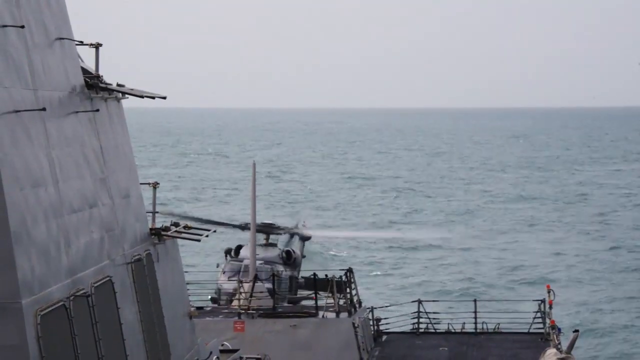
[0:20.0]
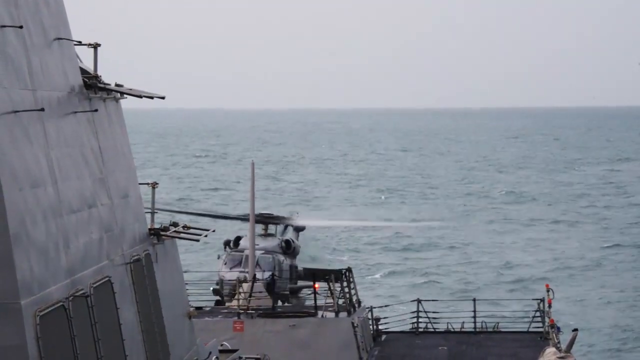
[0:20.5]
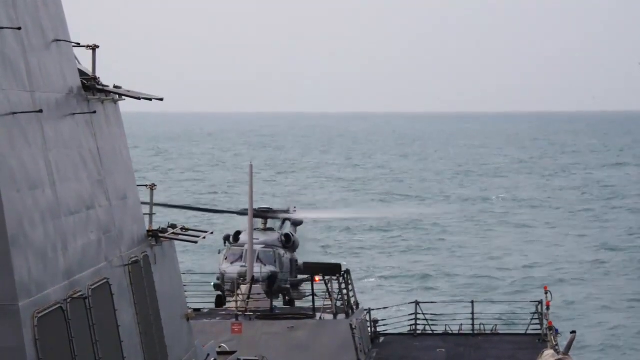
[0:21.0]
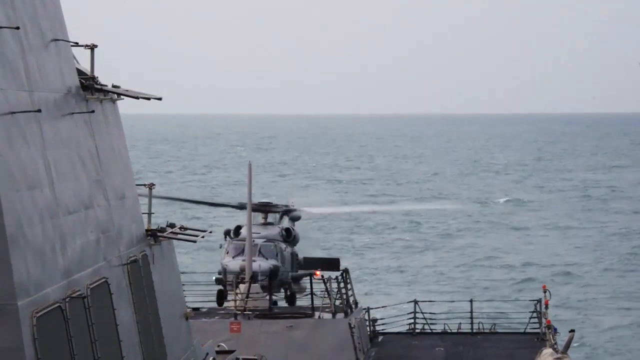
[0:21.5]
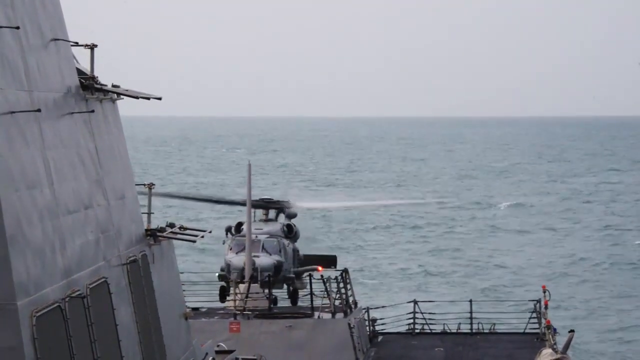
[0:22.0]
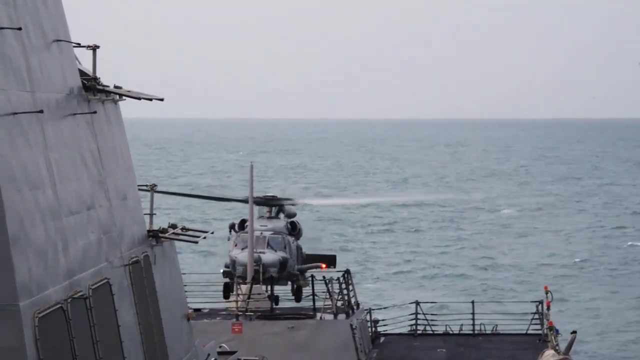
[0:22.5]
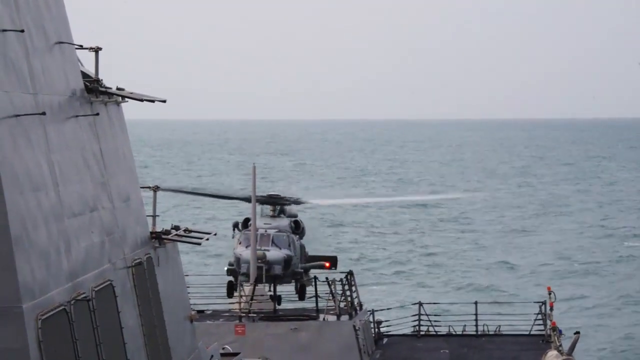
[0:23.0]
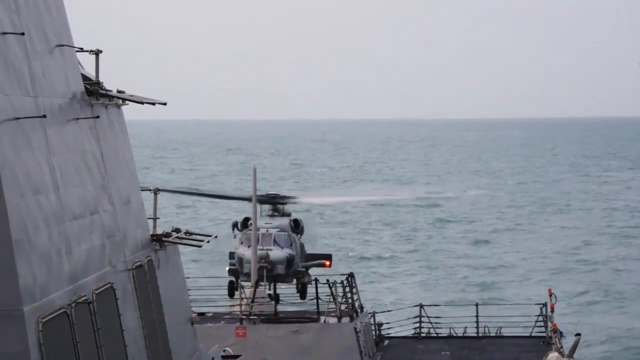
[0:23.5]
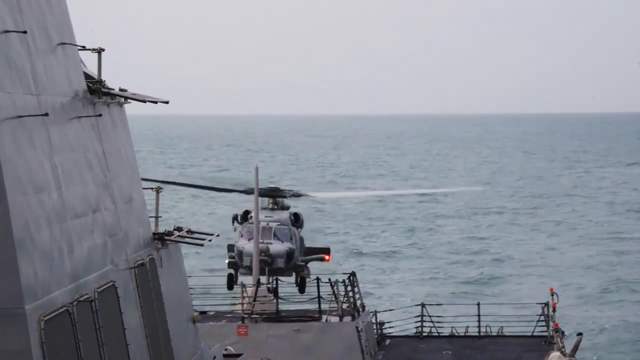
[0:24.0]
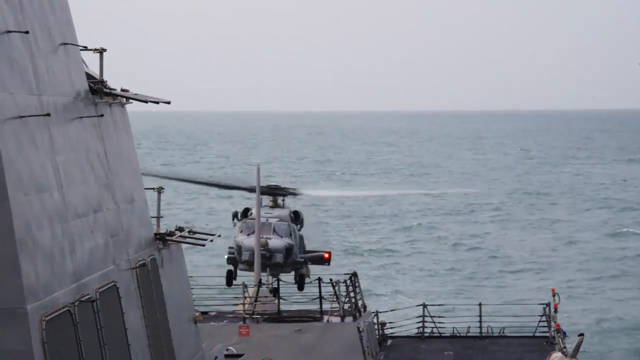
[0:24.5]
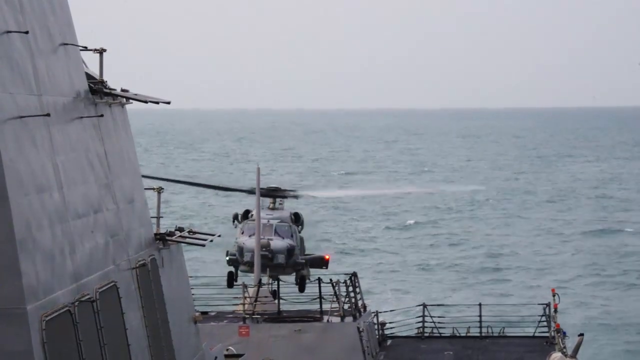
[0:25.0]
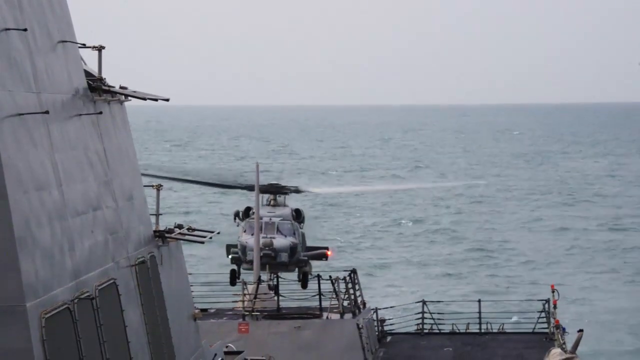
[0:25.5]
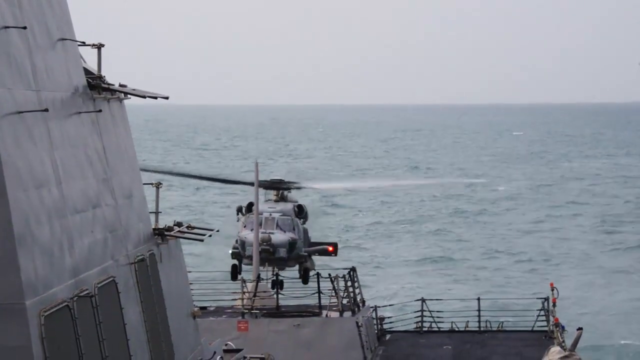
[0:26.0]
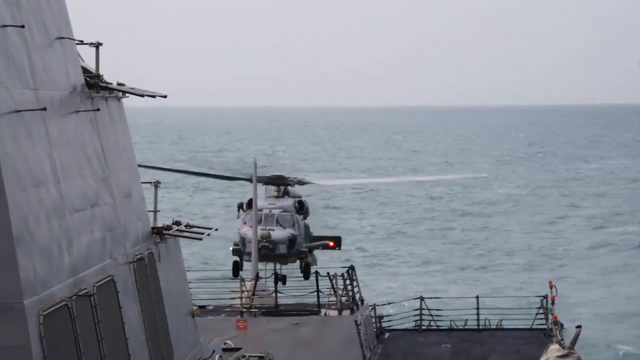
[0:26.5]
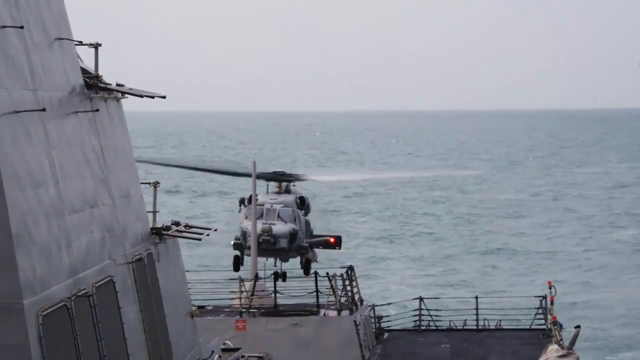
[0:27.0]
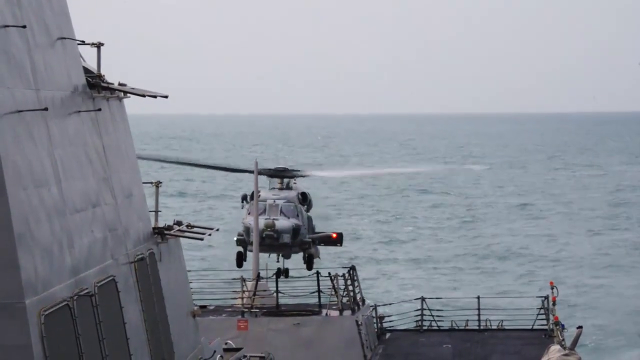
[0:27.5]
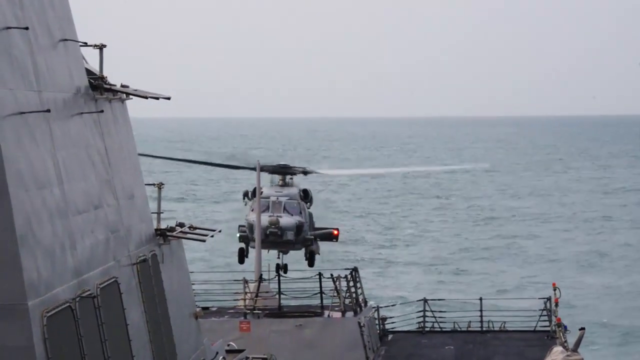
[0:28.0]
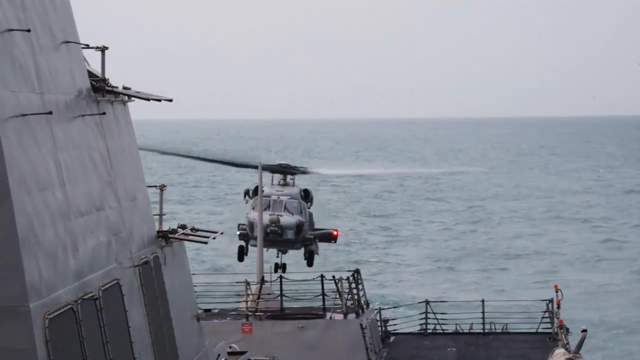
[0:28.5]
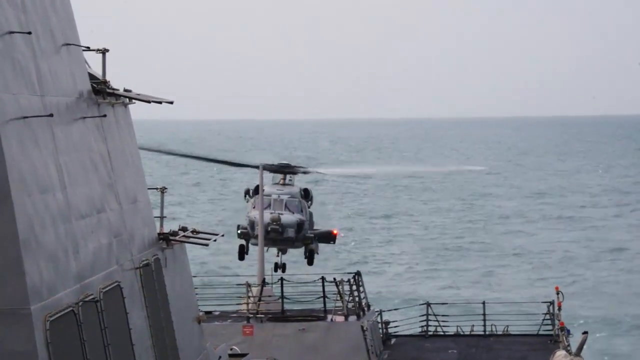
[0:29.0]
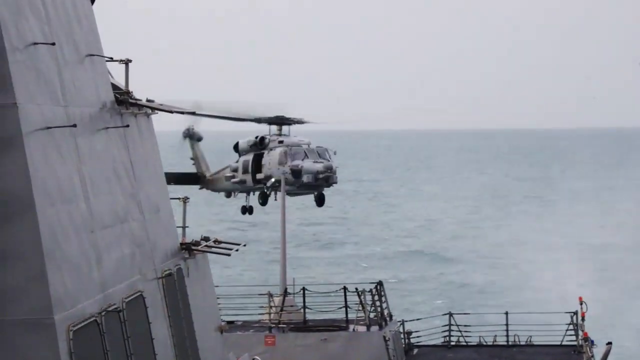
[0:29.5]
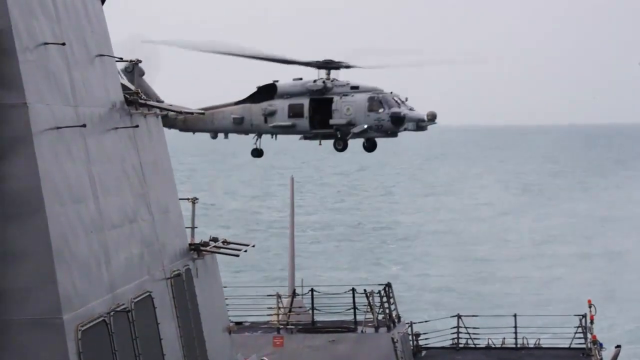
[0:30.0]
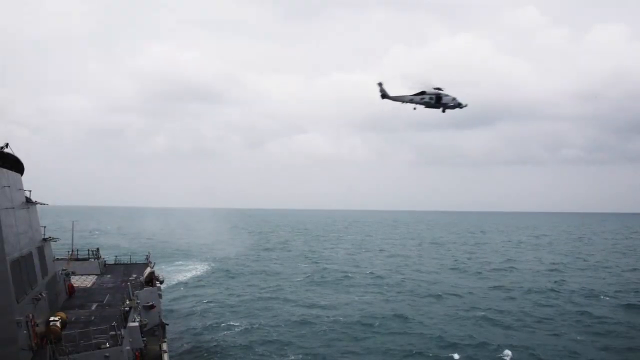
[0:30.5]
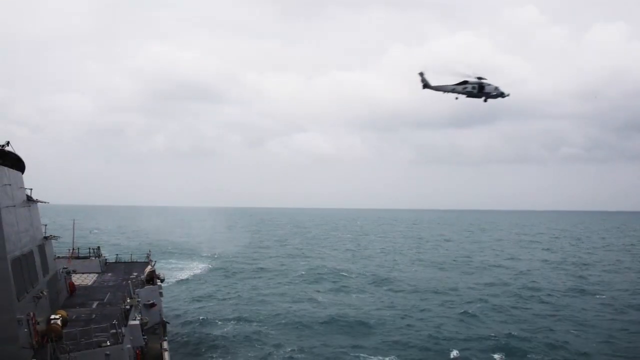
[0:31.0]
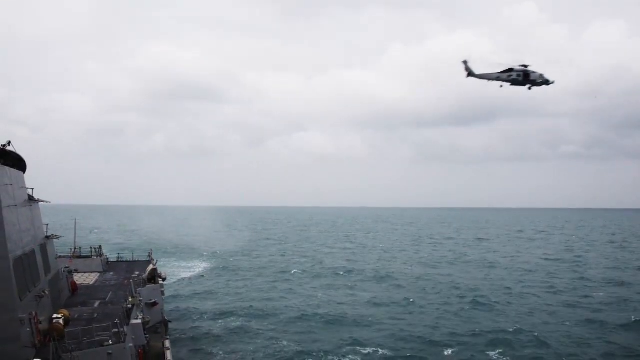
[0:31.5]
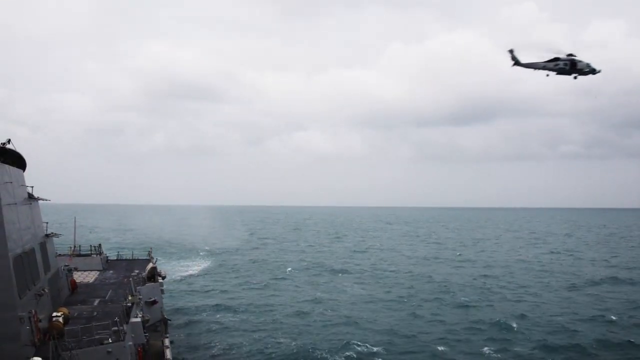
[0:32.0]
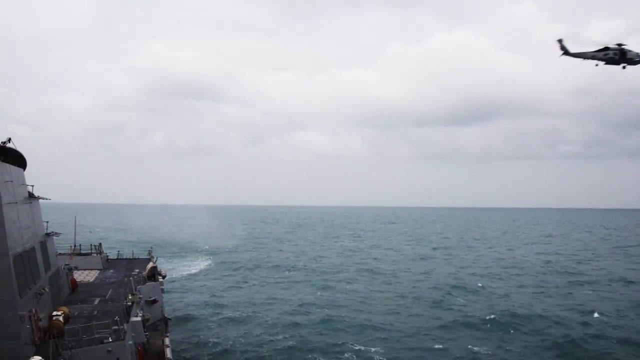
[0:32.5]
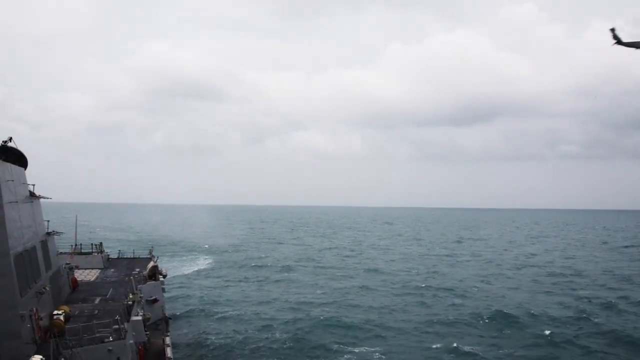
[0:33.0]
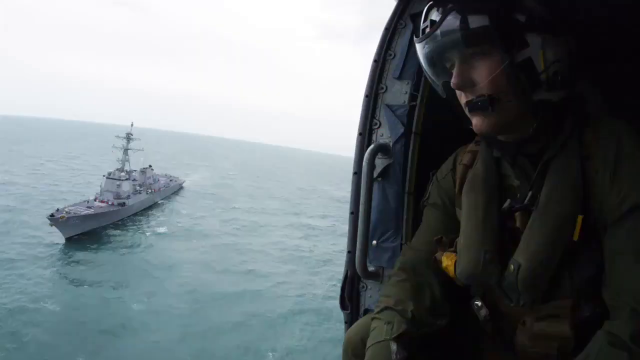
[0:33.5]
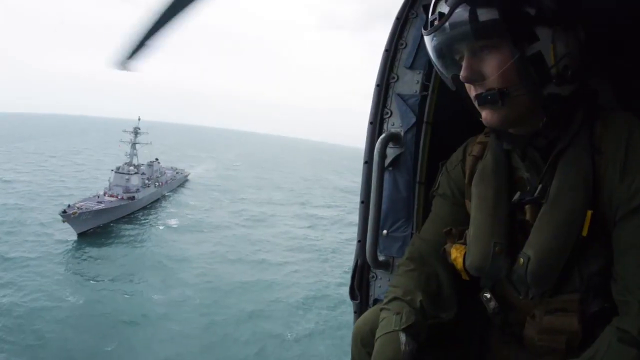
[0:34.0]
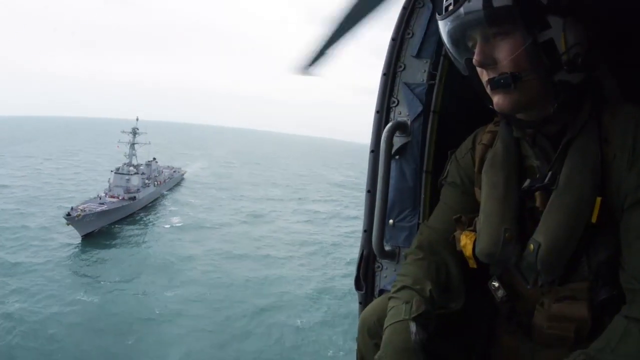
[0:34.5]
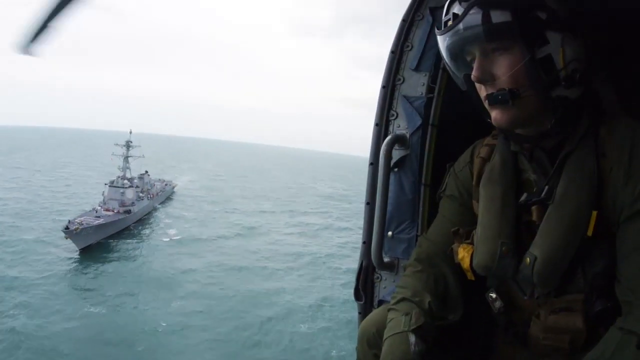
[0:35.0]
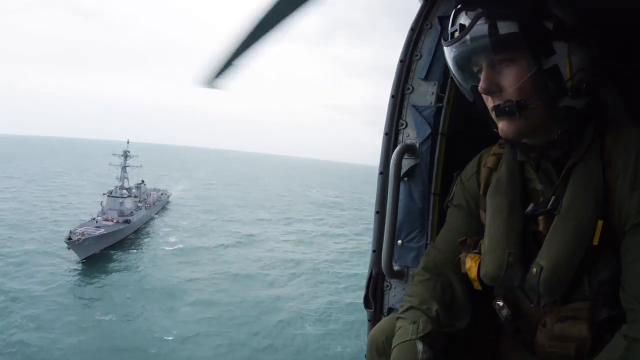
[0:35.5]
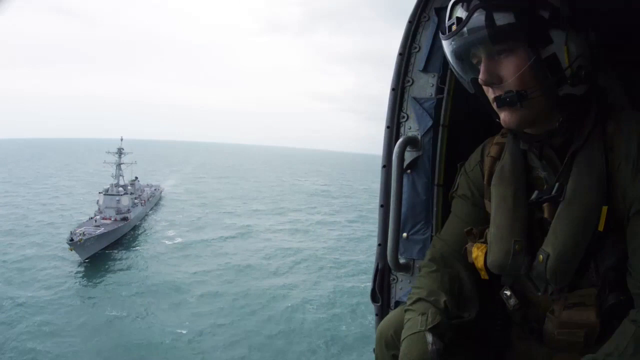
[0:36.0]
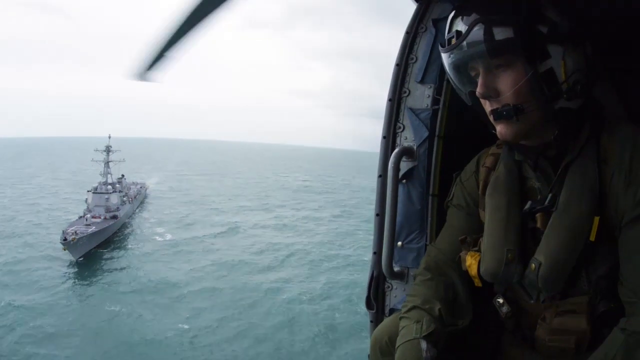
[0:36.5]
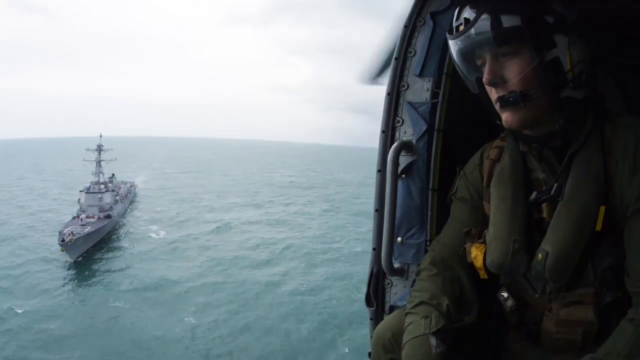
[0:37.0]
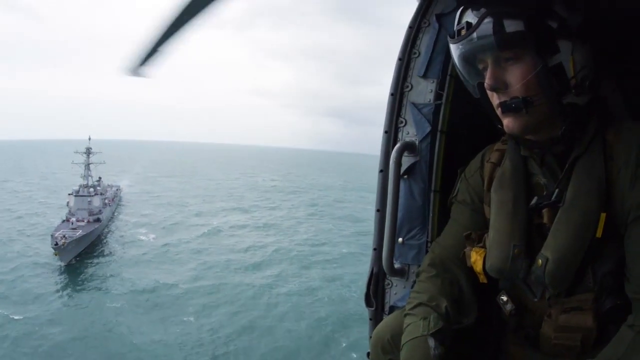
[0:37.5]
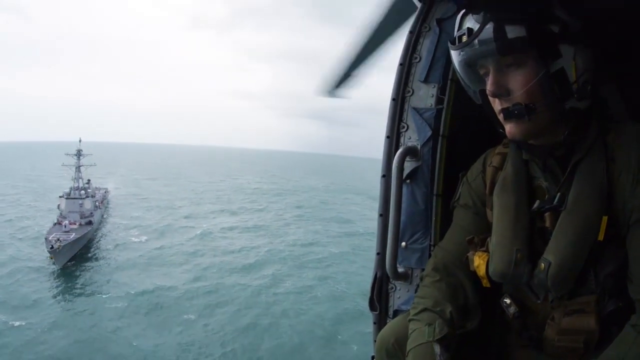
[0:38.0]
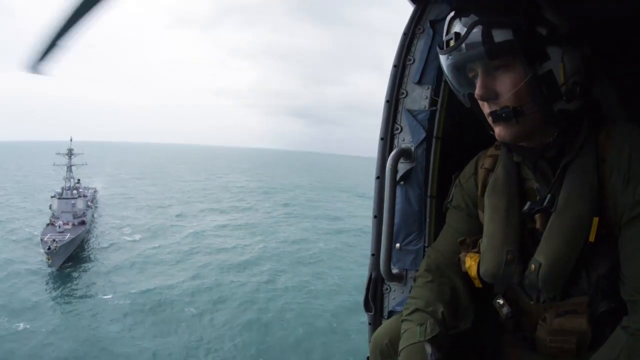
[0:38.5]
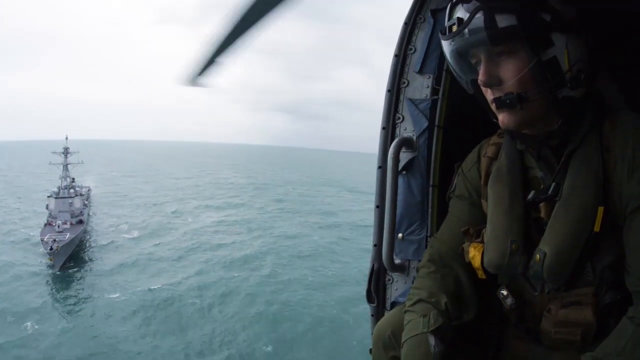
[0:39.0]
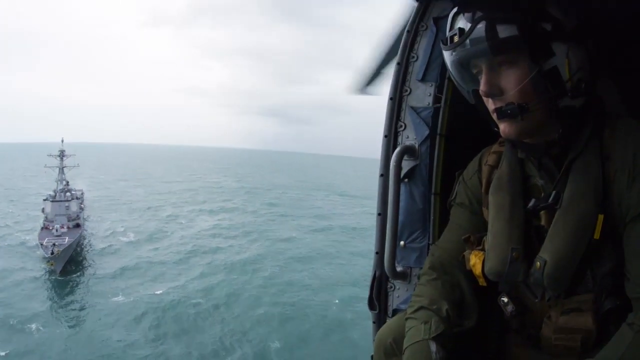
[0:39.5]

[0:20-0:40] The helicopter, about to take off, hovers over the helipad, rises vertically straight up, and then flies away. The airman from the beginning is now inside the helicopter, sitting by the opening. He wears a full helmet and a harness around his chest, and the battleship is in view, very close to him. The spinning blades of the helicopter are visible. The airman looks to be in his late twenties or thirties, a white male of medium build, and there is a grab bar or handlebar next to him. The battleship sails on calm, completely flat water in the middle of the ocean. A brief view of the helicopter's control panel or dash panel follows.